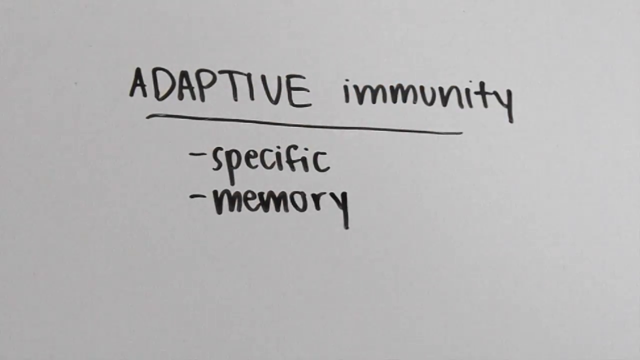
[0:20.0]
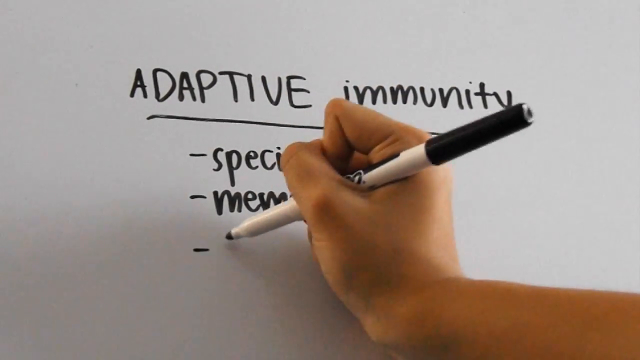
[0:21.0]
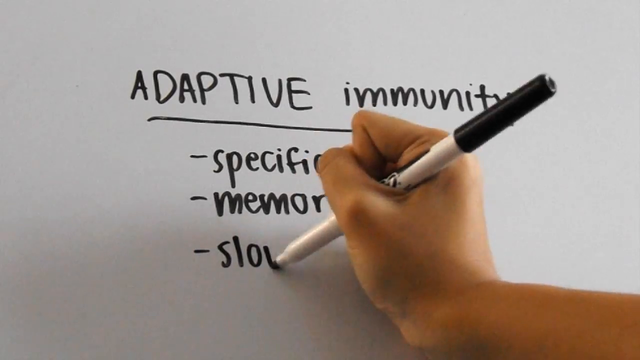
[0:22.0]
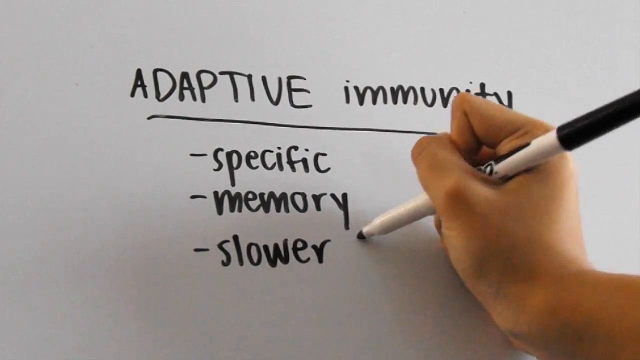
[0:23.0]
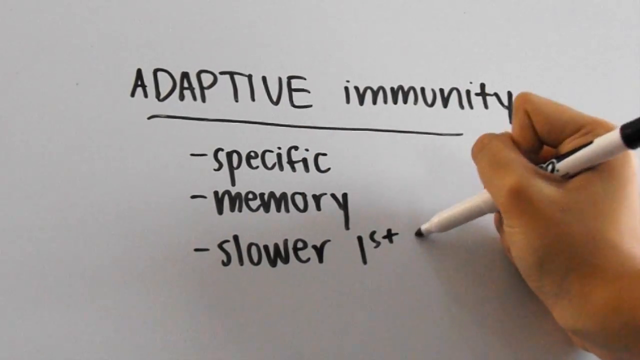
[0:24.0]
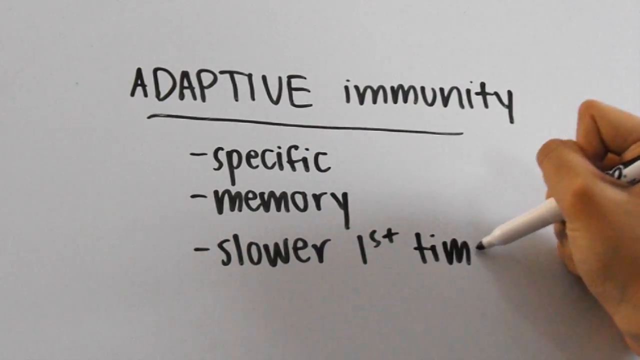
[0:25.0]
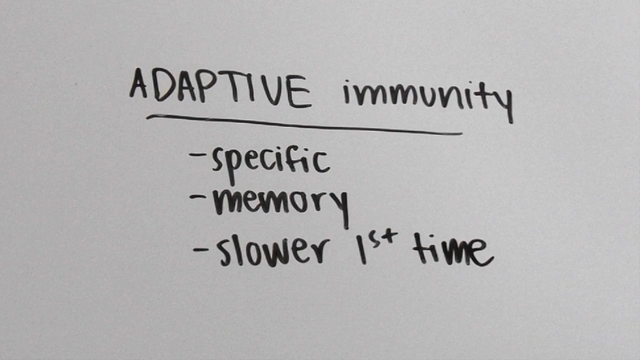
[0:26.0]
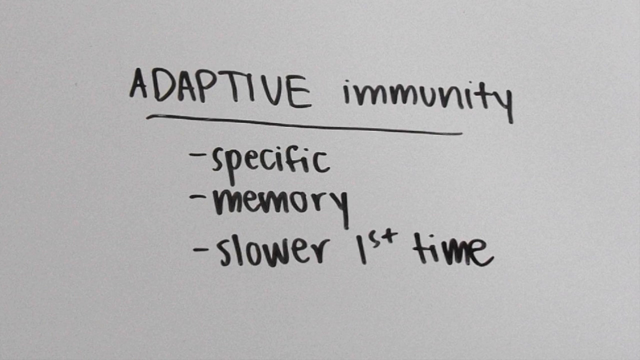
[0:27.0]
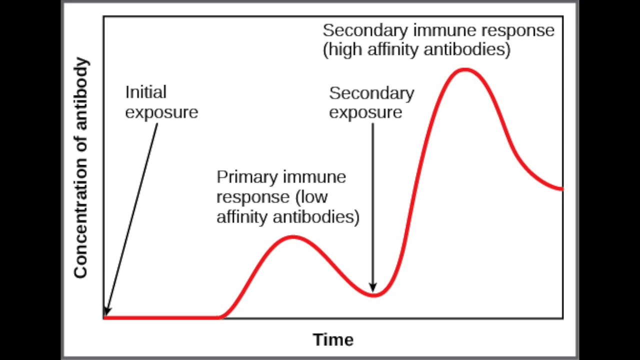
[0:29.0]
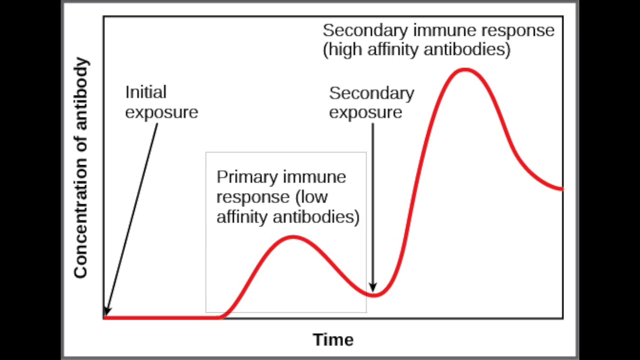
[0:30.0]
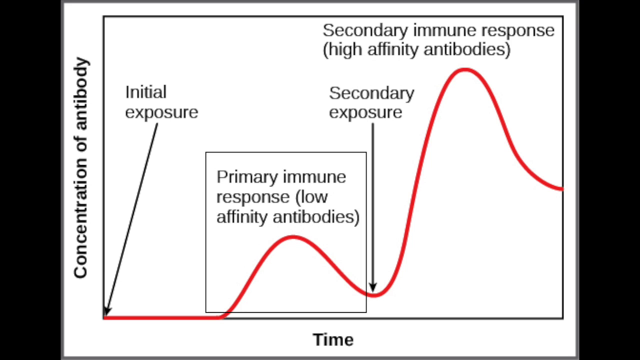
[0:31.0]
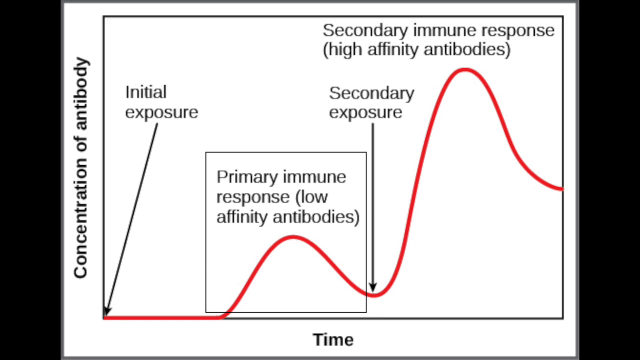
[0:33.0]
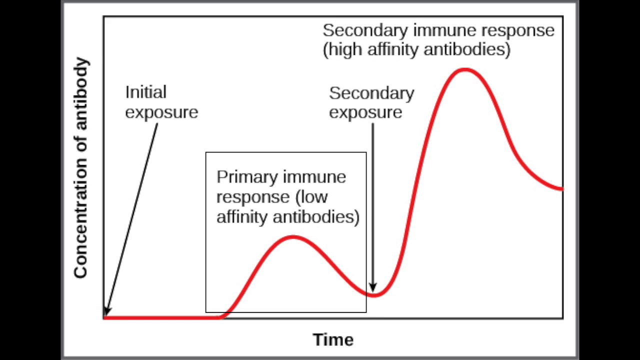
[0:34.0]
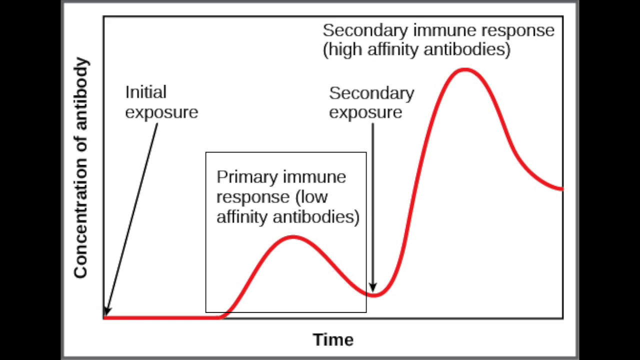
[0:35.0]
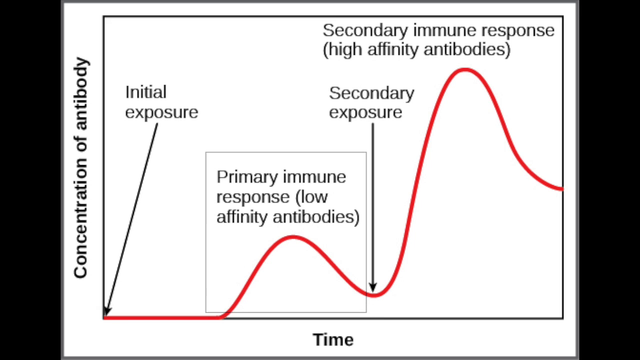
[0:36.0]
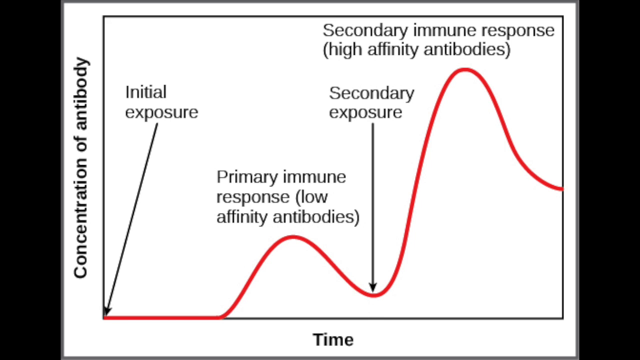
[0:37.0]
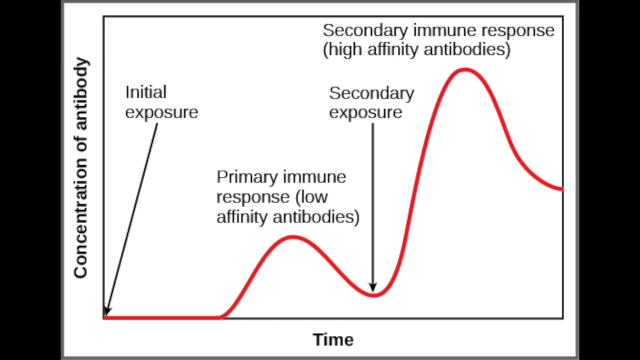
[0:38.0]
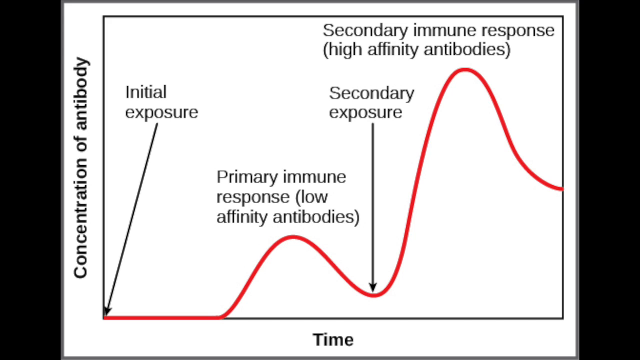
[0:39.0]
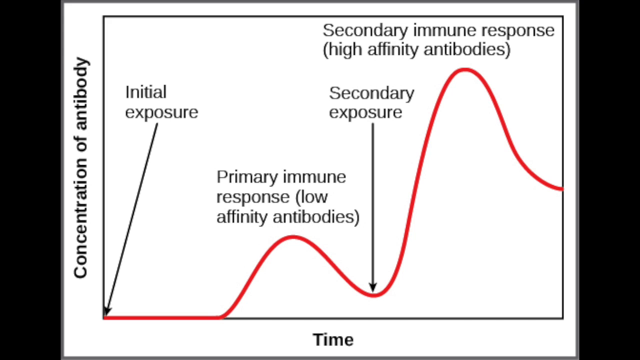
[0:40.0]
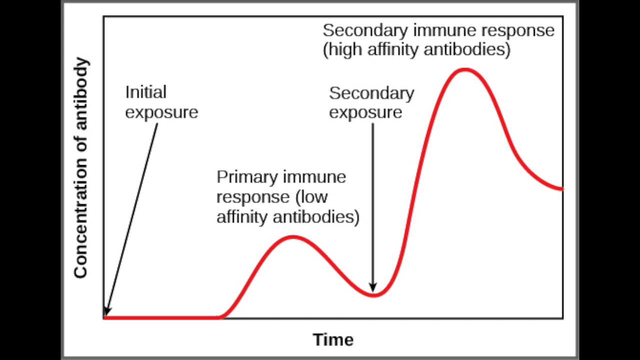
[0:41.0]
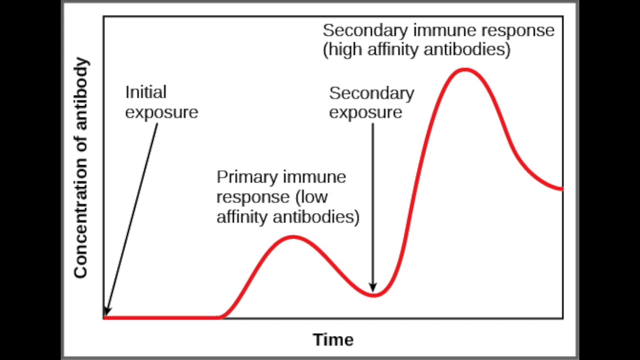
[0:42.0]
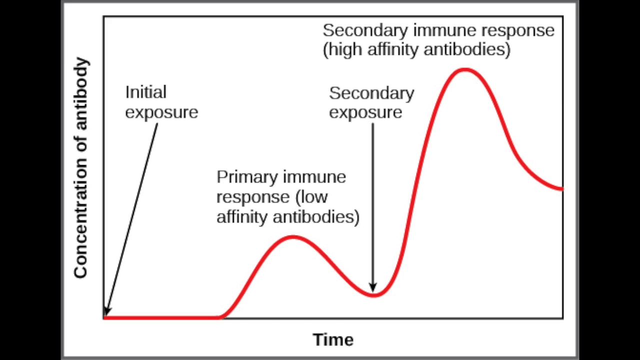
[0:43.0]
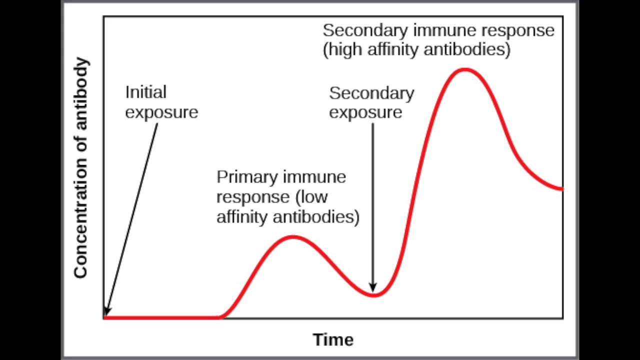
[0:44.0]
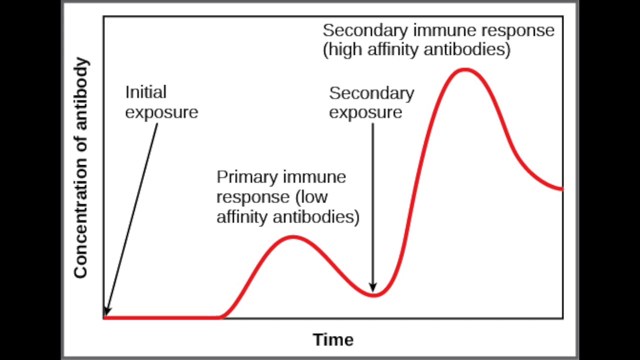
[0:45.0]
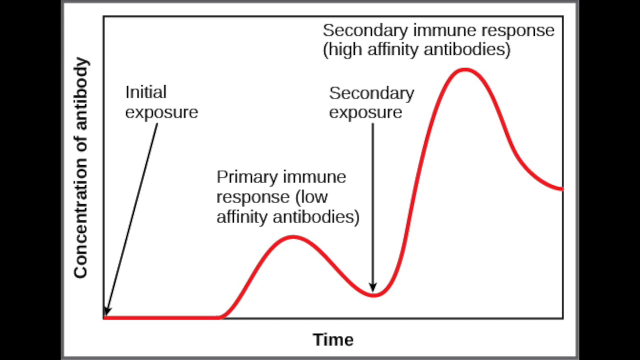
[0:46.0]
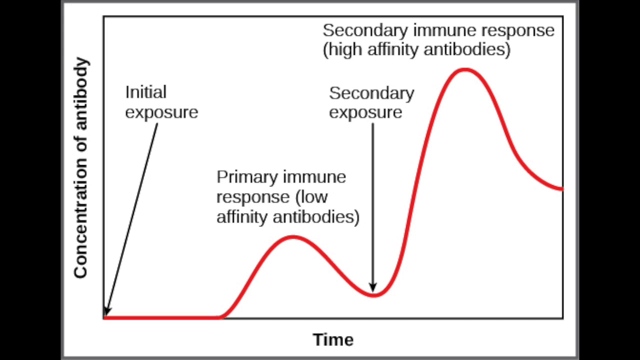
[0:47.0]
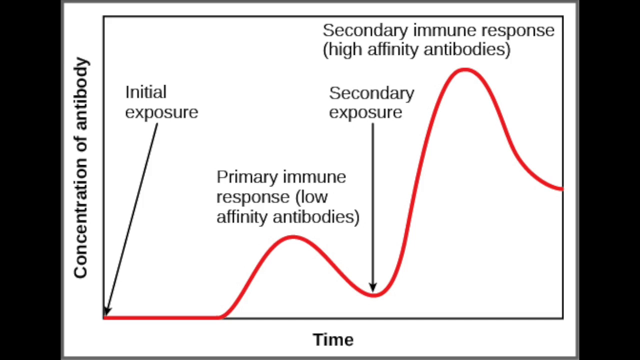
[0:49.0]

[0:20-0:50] In the same handwritten black lettering on the white surface, "ADAPTIVE" is written in all caps, followed by "IMMUNITY" in small caps. Another line is underneath these two words, and the words and line slant slightly toward the bottom left. Below that is a dash with the word "SPECIFIC" to its right in small caps, then another dash with the word "MEMORY" to its right. The hand comes into view holding a white marker with a black tip in the same odd way, gripping it with the thumb in a fist, with the fleshy part of the hand placed on the surface while writing, rather than holding the pen between two fingers. The pen now has a black cap on its back. The person writes a dash under "MEMORY" and to its right writes "SLOWER FIRST TIME". The shot cuts away from the hand to a black background with a graph in the middle of the foreground. The left axis reads "CONCENTRATION OF ANTIBODY" and the bottom axis reads "TIME"; the graph is closed at the top and on the right as well. A line labeled "INITIAL EXPOSURE" starts in the bottom left corner and goes up, not straight, but at roughly 30 degrees. A red graph line starts flat along the horizontal axis, then just under a third of the way along makes a small upward slope like a hill, dips down again just past halfway along the horizontal axis, then rises very steeply far up and dips down again. An arrow labeled "SECONDARY EXPOSURE" points to the first dip, and "SECONDARY IMMUNE RESPONSE (HIGH-AFFINITY ANTIBODIES)" is written above the peak of the graph.